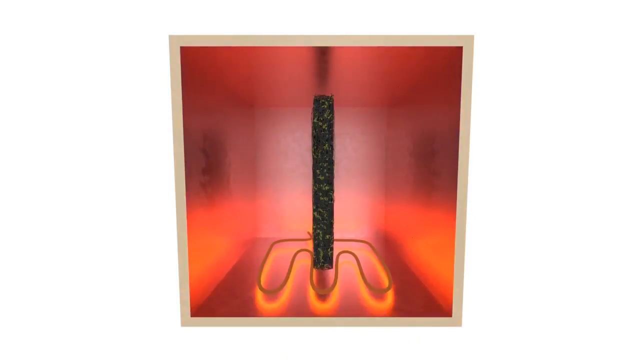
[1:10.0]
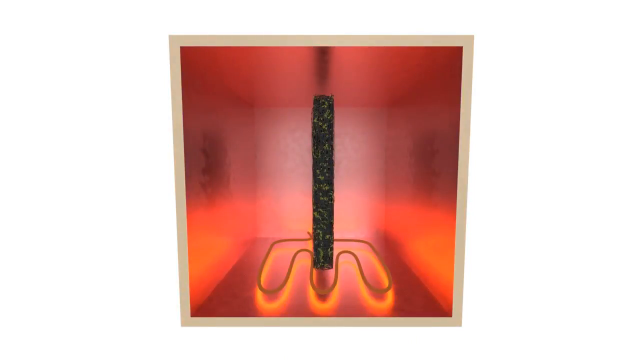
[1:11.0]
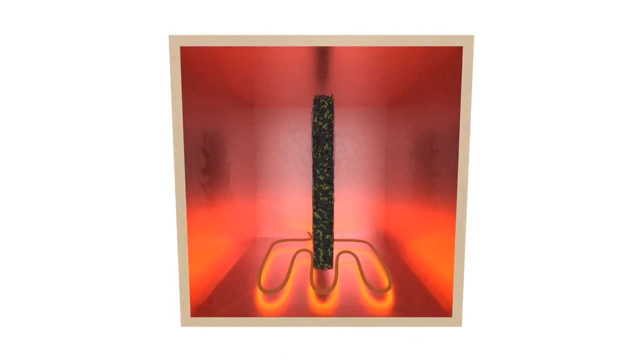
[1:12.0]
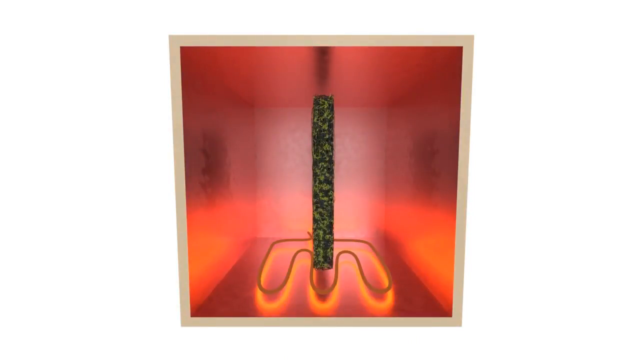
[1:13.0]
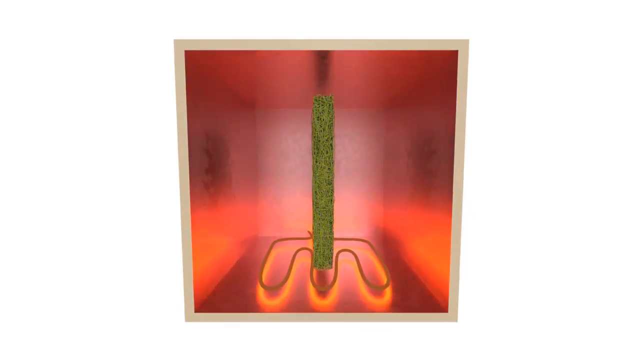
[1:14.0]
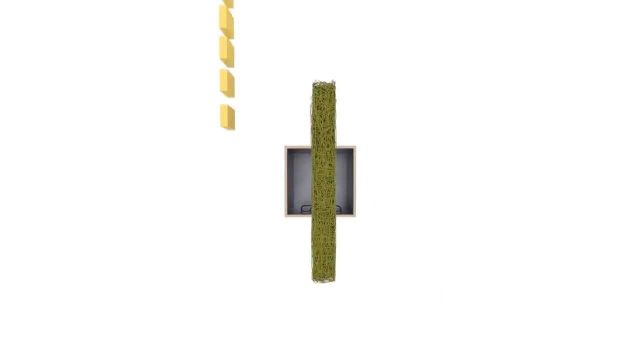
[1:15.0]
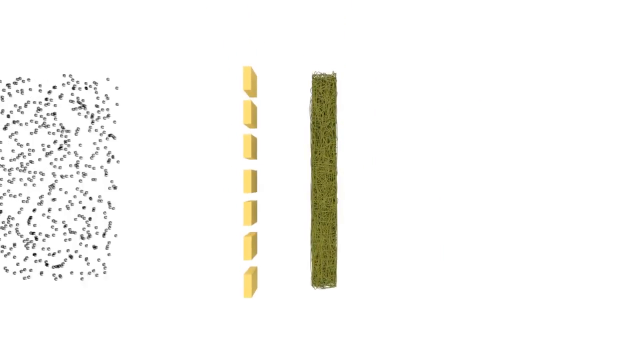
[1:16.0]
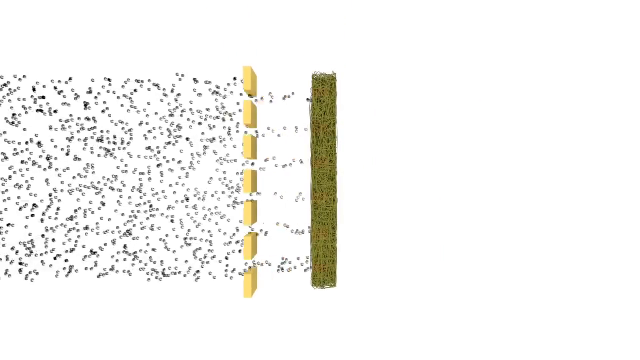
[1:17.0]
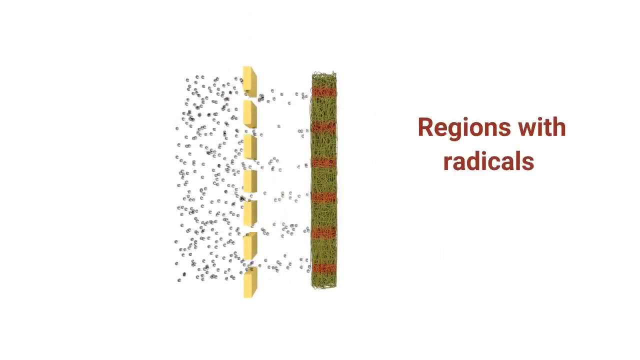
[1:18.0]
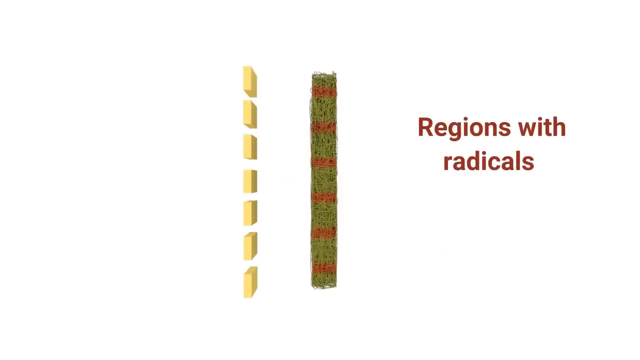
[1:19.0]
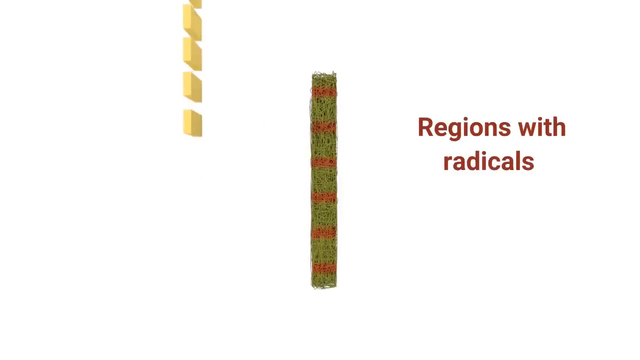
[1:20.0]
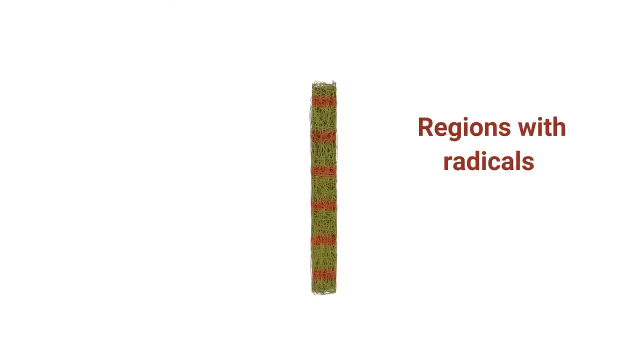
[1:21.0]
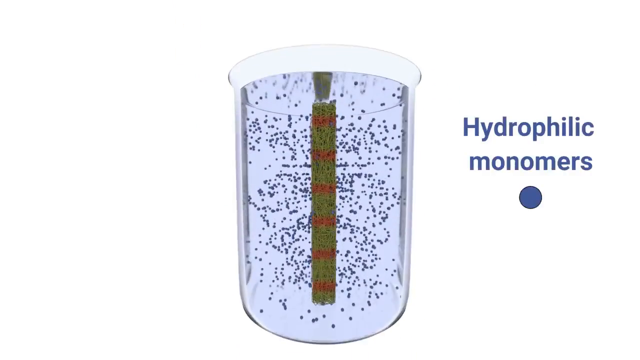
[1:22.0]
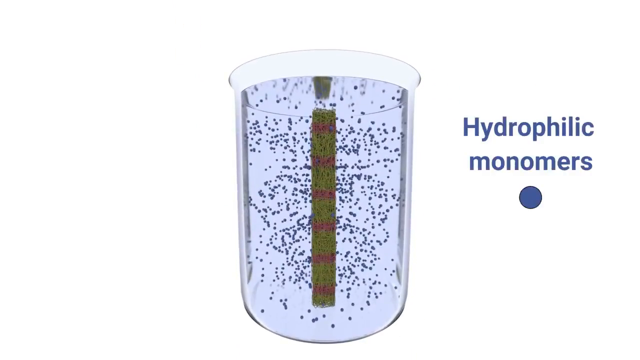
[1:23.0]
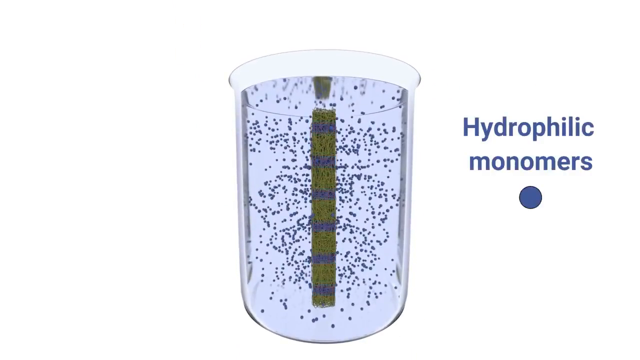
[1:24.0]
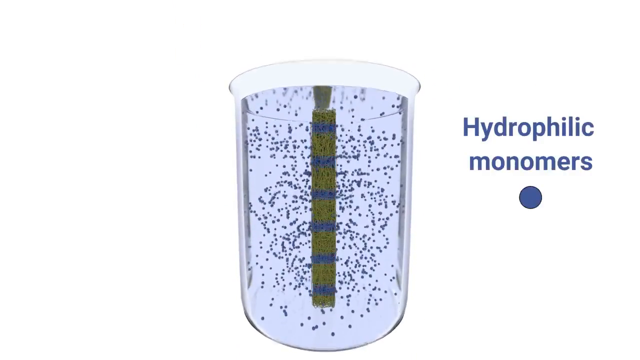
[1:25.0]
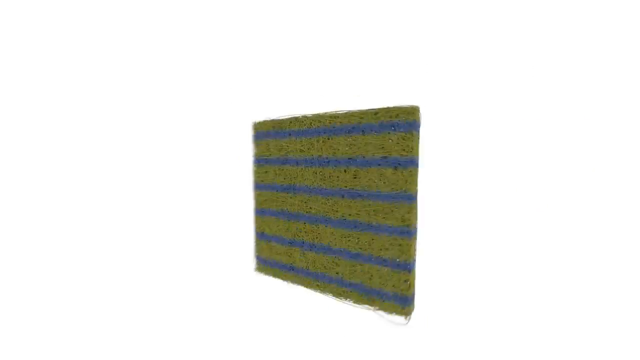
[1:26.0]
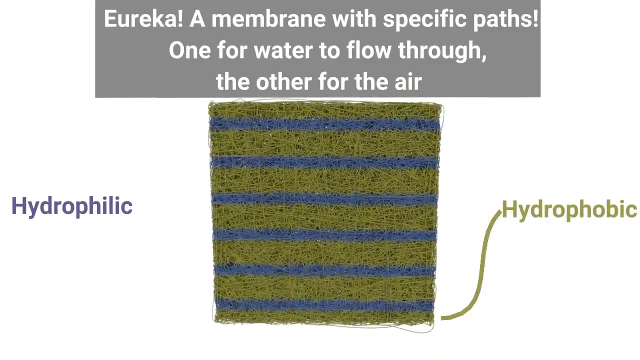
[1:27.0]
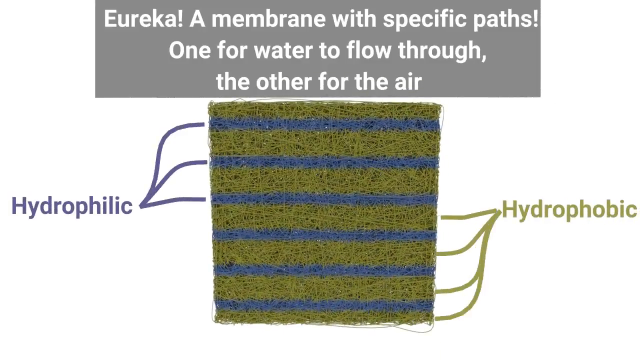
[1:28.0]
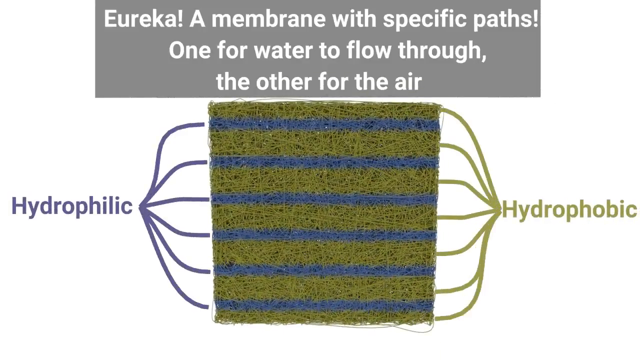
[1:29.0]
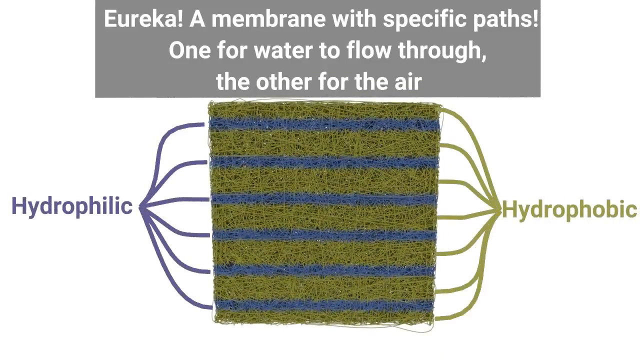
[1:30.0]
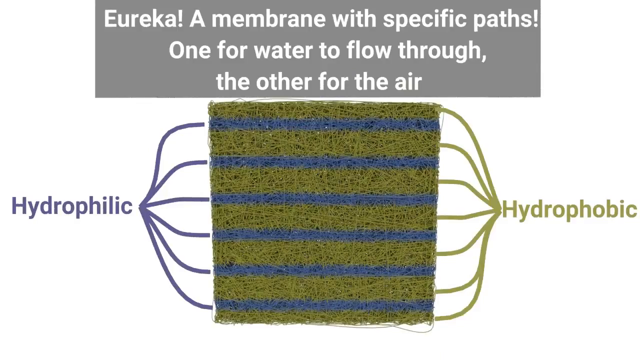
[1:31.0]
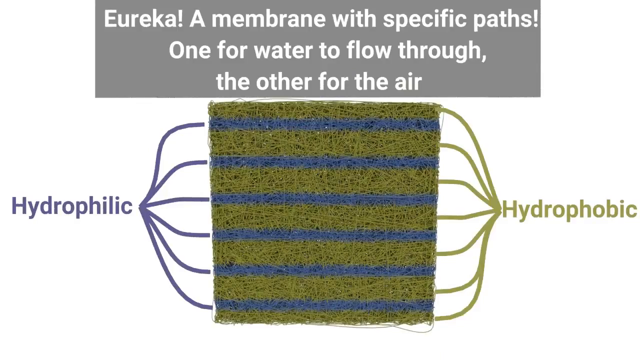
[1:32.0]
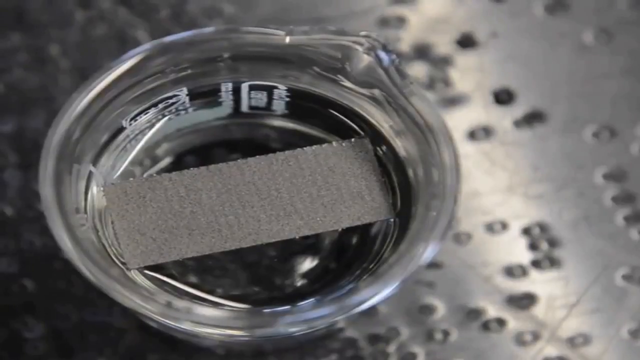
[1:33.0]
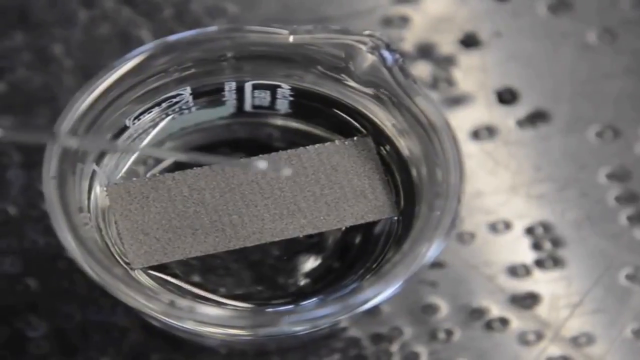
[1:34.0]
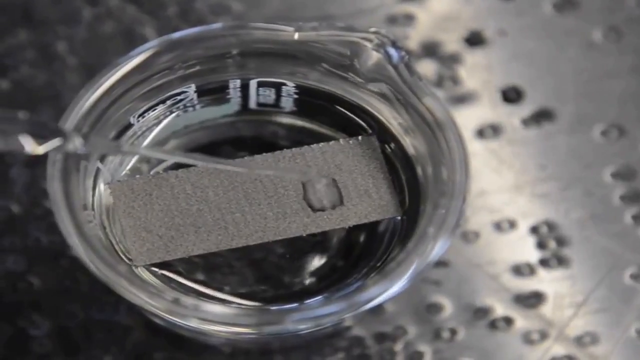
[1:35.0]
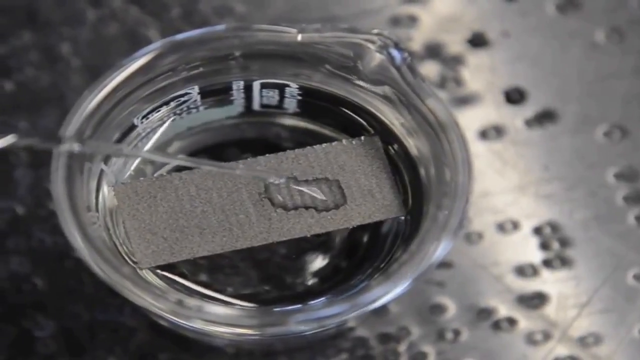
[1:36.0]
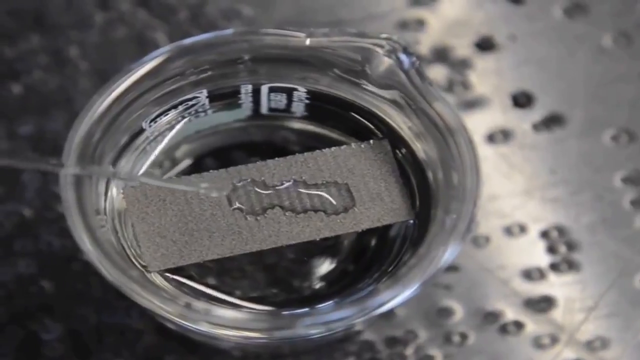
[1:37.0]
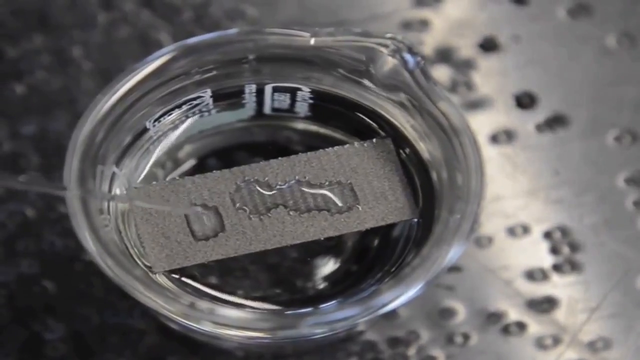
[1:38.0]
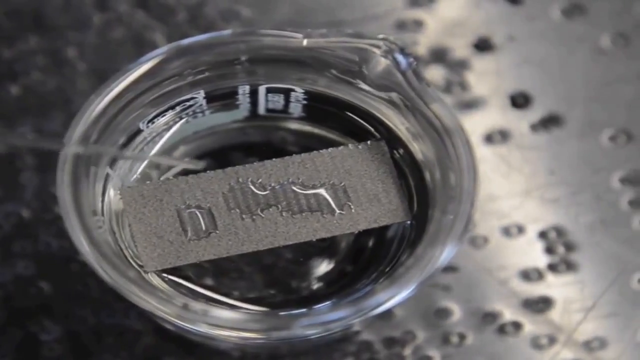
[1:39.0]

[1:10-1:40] The gray fibrous column is inside a shiny box heated by a heating element at the bottom. The box falls away, leaving the heating element and the fibrous material behind; the material is now green with no liquid around it, looking as if it might have been changed by the heat. A series of yellow boxes lined up vertically to the left of it drops down. Small gray dots move from the left of the screen toward the middle to strike the green material; the yellow boxes block them, but the gray dots get through the gaps between them, striking the material and creating red horizontal stripes across it. A red caption on the right reads "regions with radicals." The beaker reappears from the bottom of the screen and engulfs the material, with blue text on its right reading "hydrophilic monomers" and a blue dot underneath. The beaker falls away, the red stripes have turned blue, and the material begins to spin and becomes wider, a rectangular shape striped green and blue across the middle third of the screen. A caption above it reads "Eureka, a membrane with specific paths, one for water to flow through, the other for air." On the left, blue text reads "hydrophilic," and green text reads "hydrophobic" with a curved line pointing to one of the green sections toward the bottom; swirly lines connect the terms to the corresponding blue and green regions. That disappears, and a black-and-white image shows a large beaker filled with water, with a blurry background, maybe a metal surface, bearing circular shapes, possibly water droplets. A piece of gray fibrous material resembling the one in the CG diagrams floats at the top of the beaker, and water dropped from a pipette onto it soaks into the material.